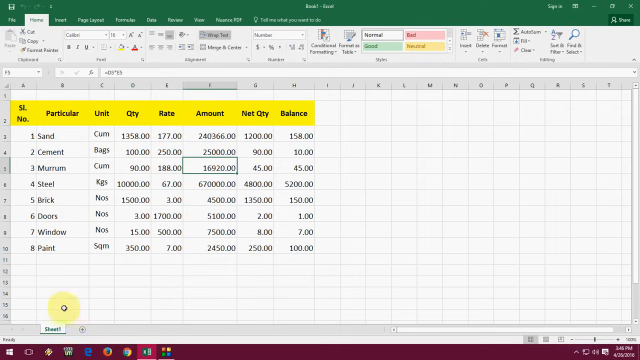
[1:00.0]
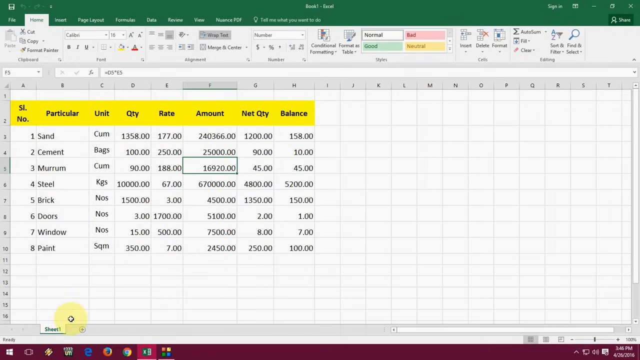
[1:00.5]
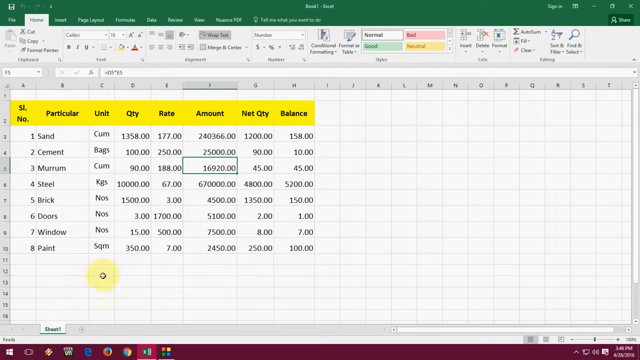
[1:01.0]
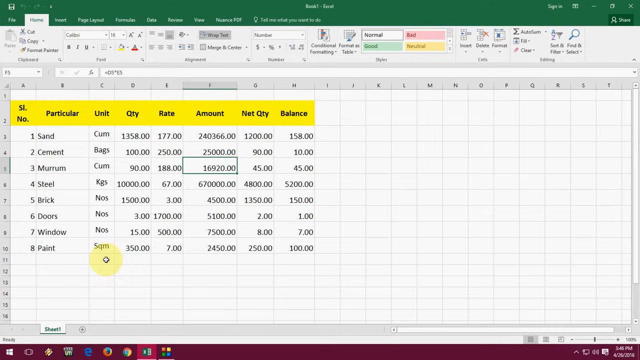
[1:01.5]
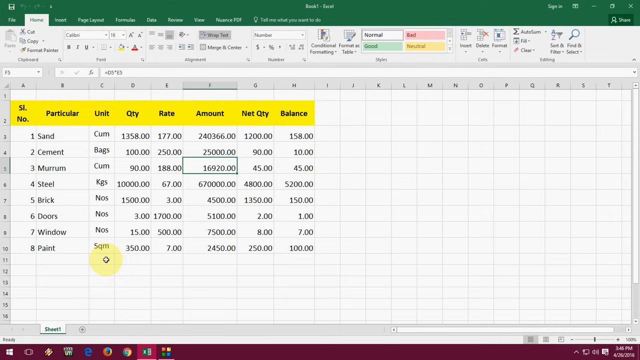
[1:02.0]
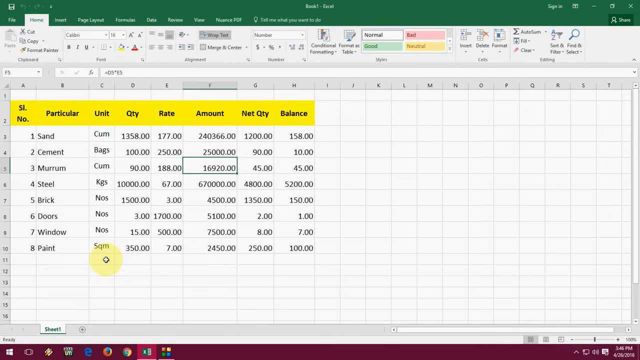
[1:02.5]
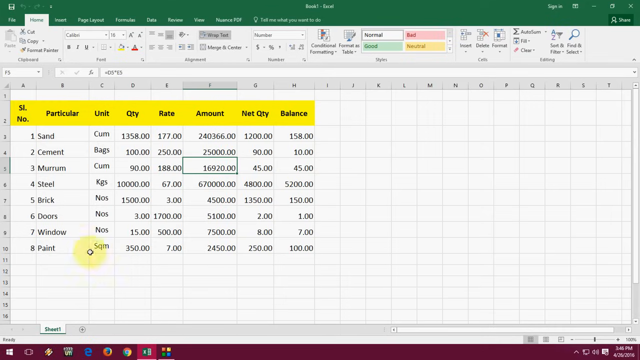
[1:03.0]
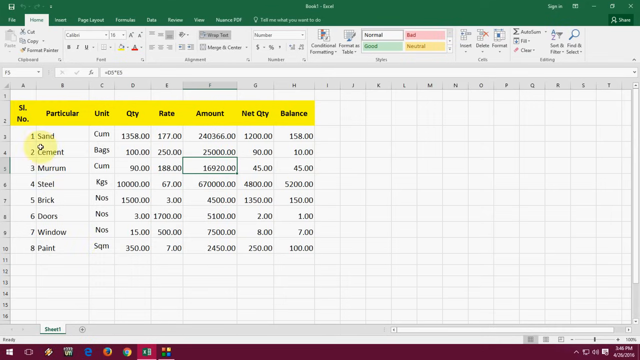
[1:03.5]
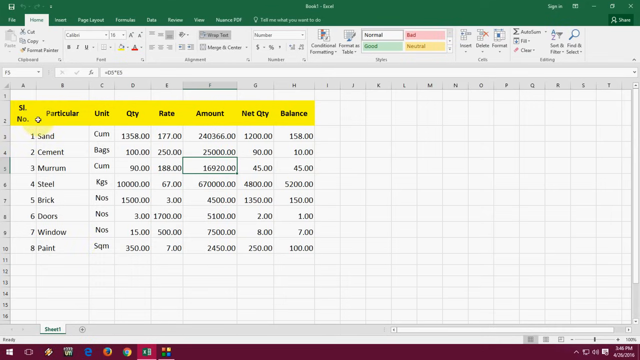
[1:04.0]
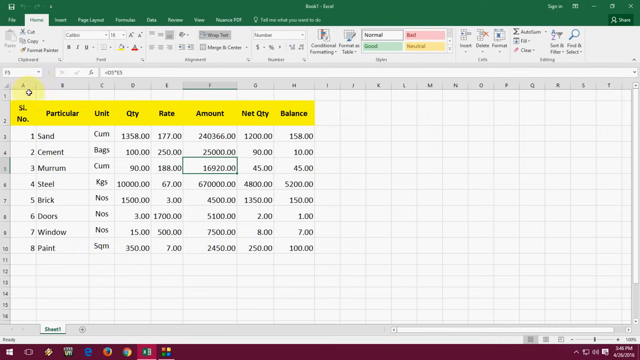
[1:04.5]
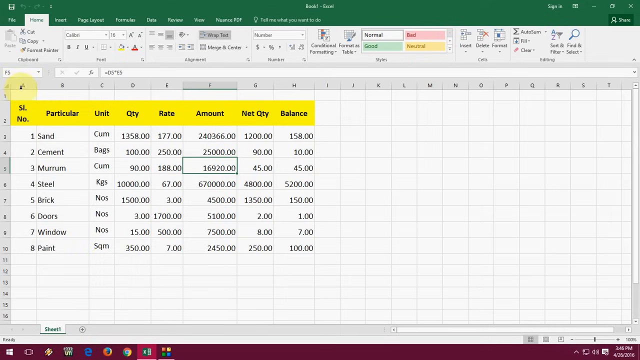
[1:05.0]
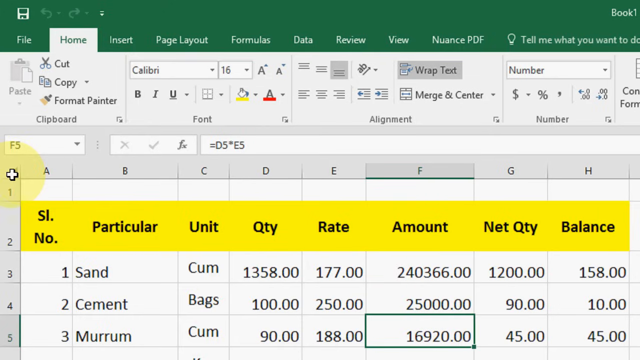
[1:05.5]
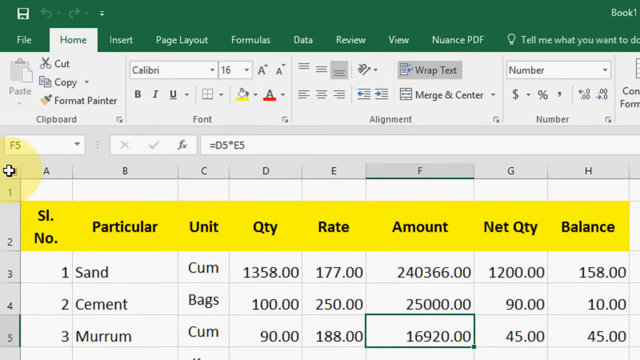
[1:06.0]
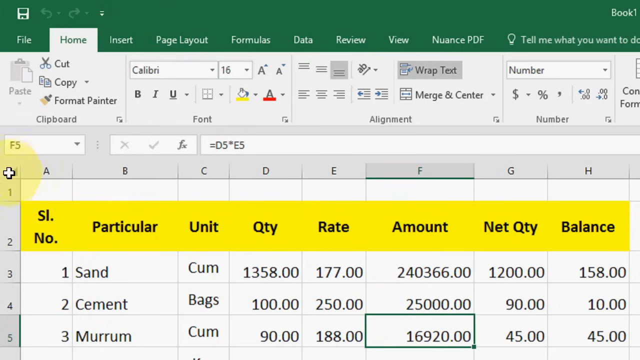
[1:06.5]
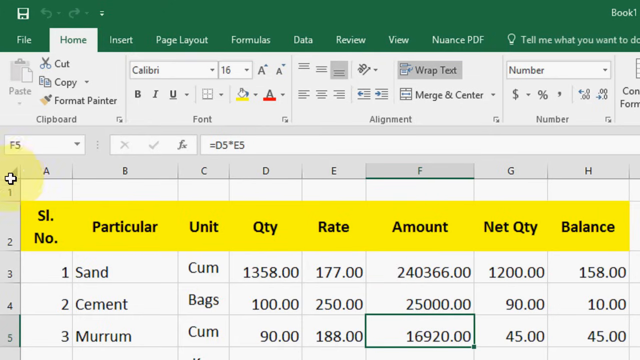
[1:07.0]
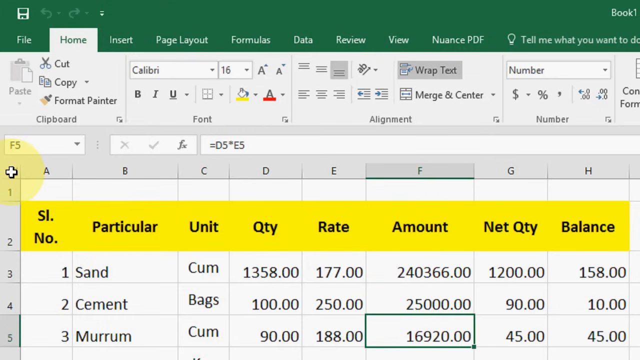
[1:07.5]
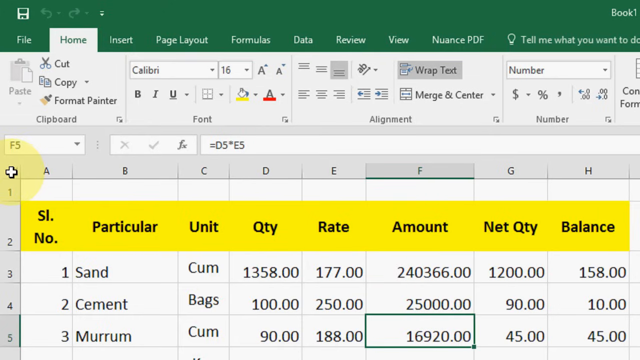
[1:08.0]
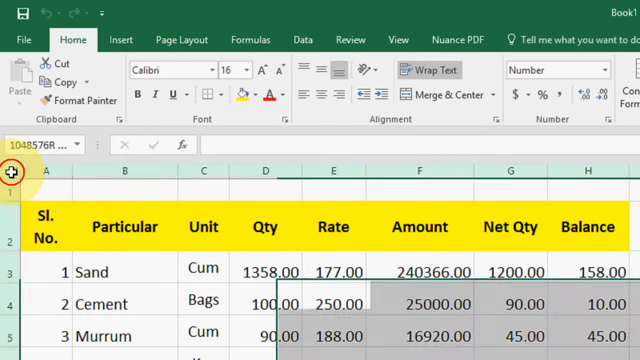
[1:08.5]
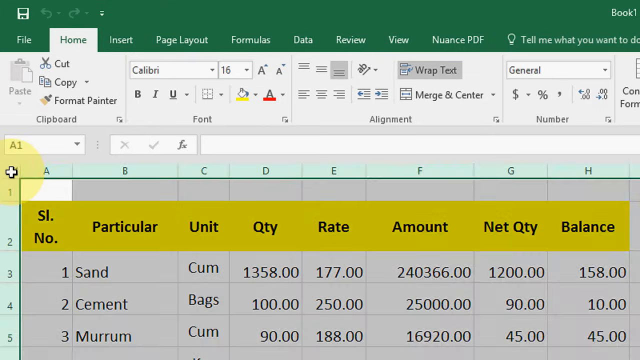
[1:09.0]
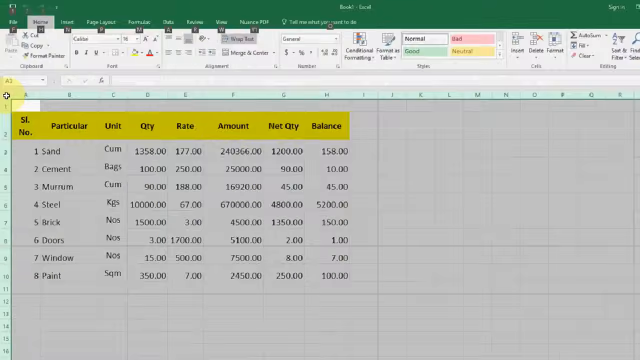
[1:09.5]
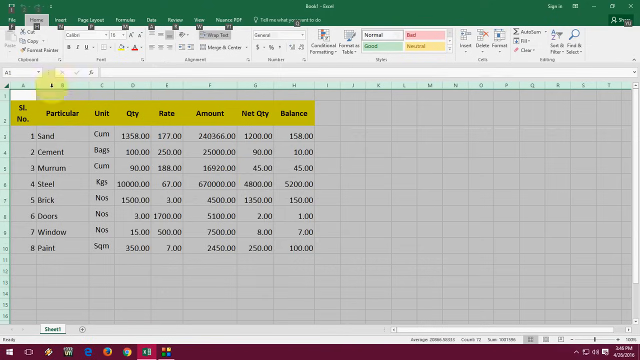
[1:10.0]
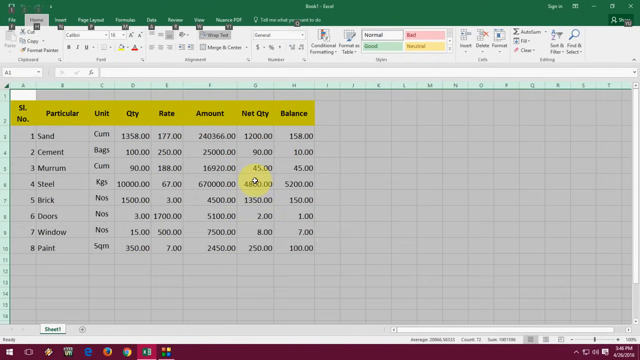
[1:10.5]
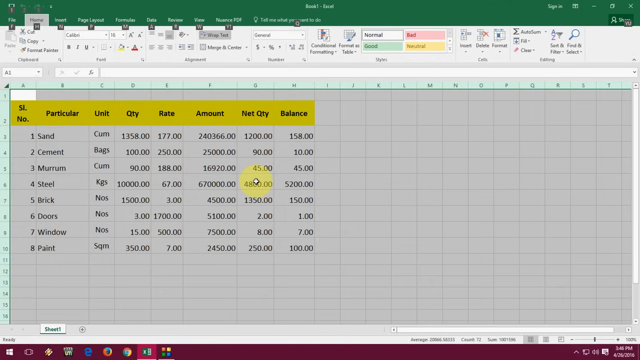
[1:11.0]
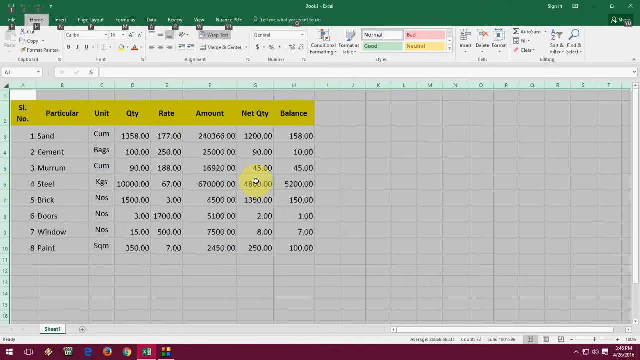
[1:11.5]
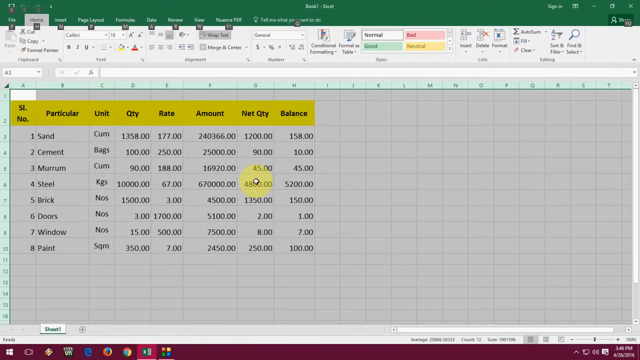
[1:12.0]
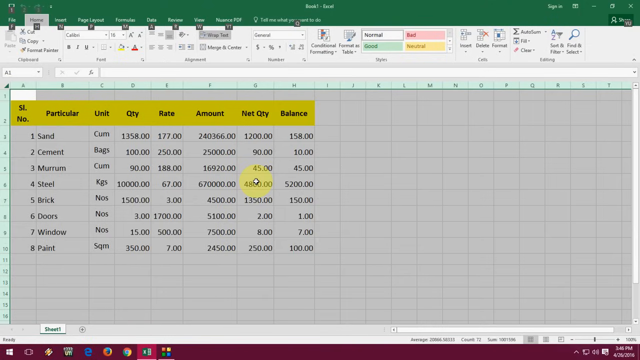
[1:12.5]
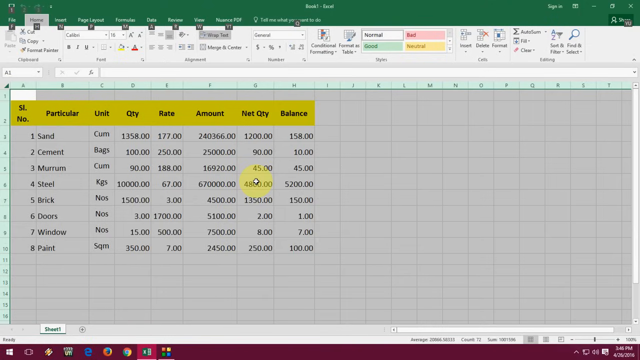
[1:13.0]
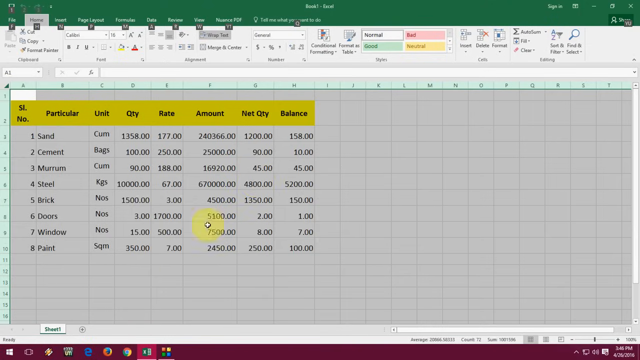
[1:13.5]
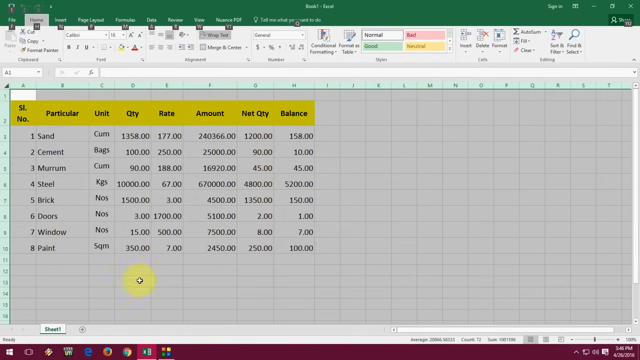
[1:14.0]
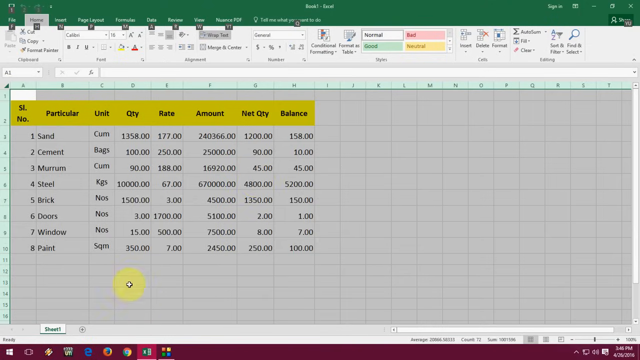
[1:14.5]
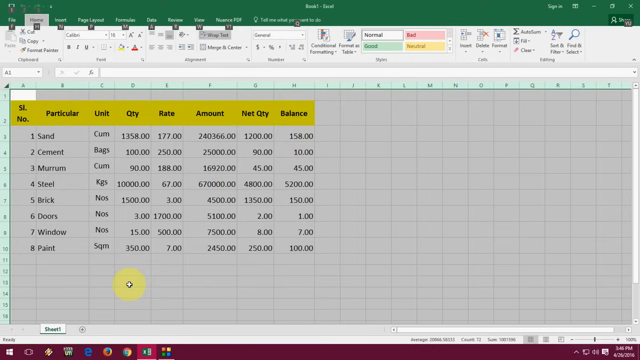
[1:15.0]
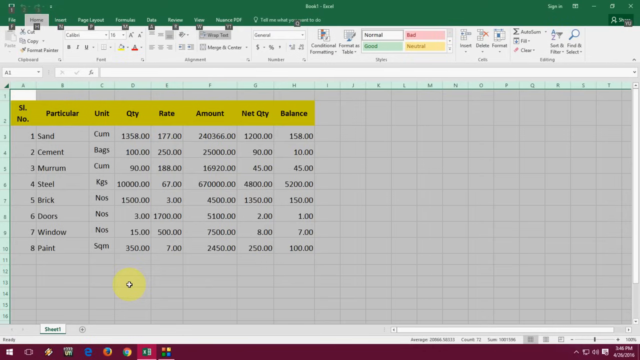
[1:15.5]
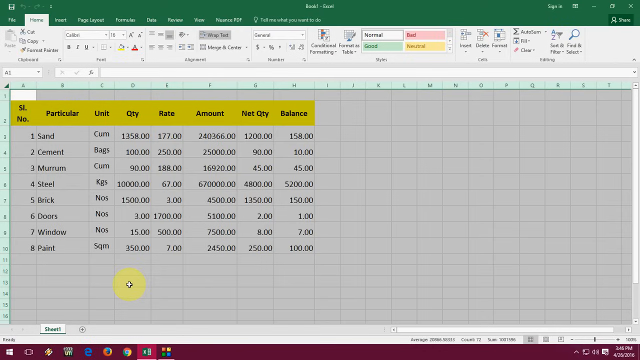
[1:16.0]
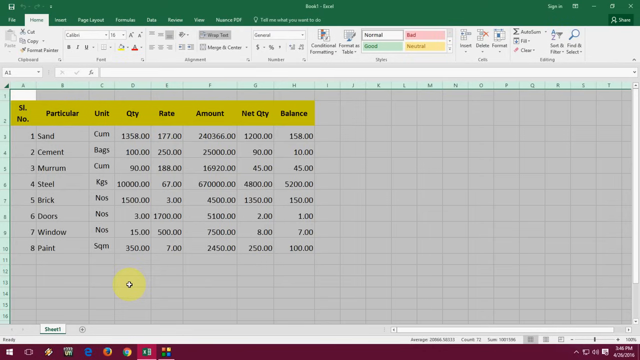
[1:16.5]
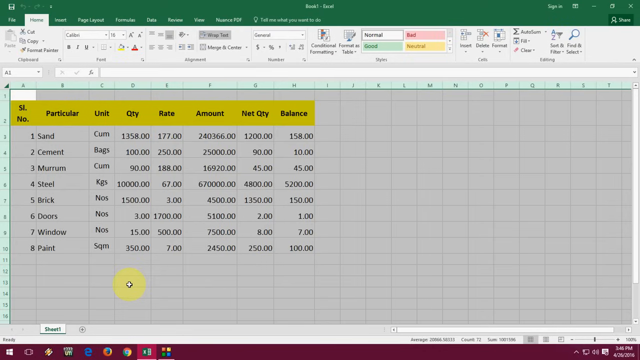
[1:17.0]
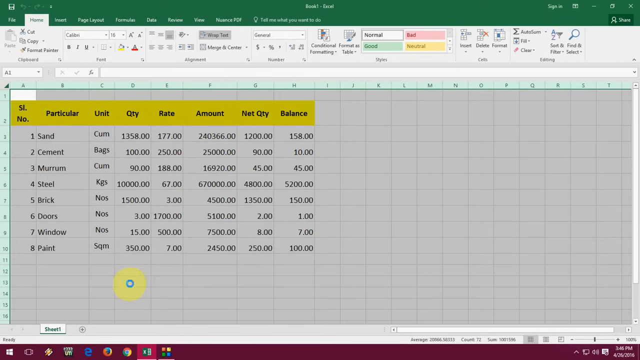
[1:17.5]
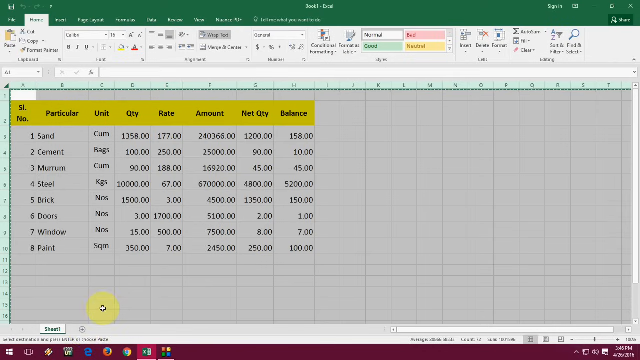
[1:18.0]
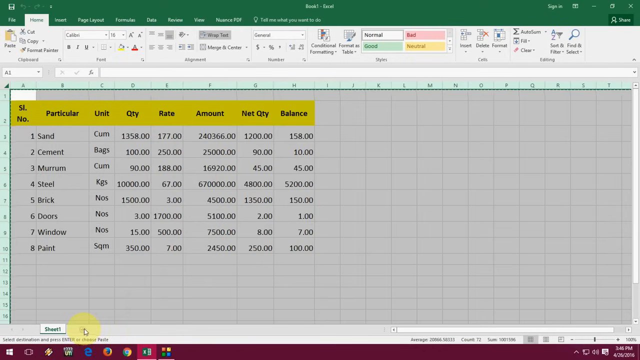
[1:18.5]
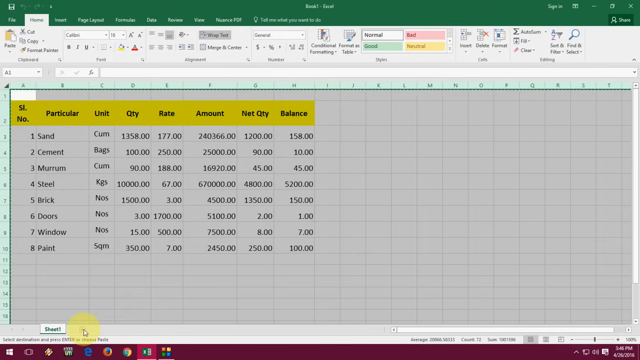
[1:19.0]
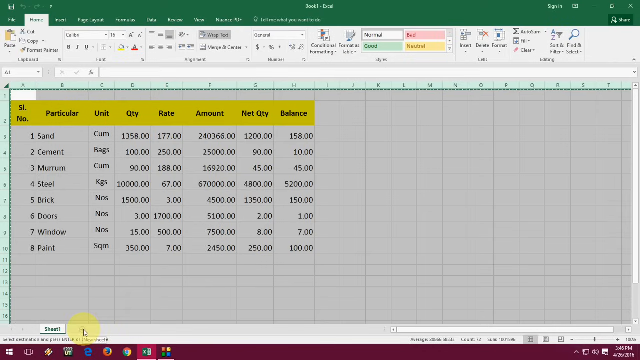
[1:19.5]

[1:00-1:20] The data entry program is shown. At the very top is a menu with a green background whose words are too blurry to make out. Below it is another menu with a gray background, where a few words can be read, including cut and copy, along with bold, italic and underline options; the rest is too blurry. Column letters A through T run across the top of the chart, and row numbers 1 to 16 run down the left side. Inside the data entry area, headers read "SL number," "particular," "unit," "quantity," "rate," "amount," "net quantity" and "balance," all in black text on a yellow background. Below is a list of items: number one, sand; number two, cement; number three, unreadable; number four, steel; number five, brick; number six, doors; number seven, window; and number eight, paint.